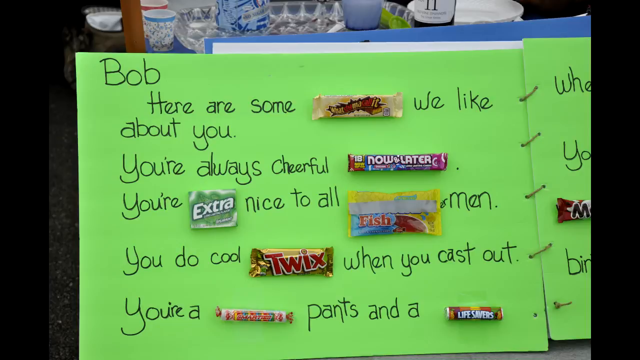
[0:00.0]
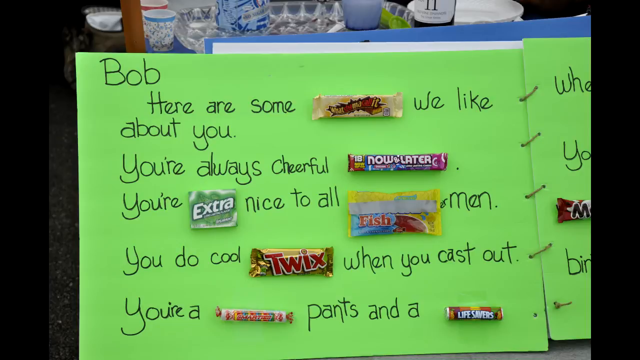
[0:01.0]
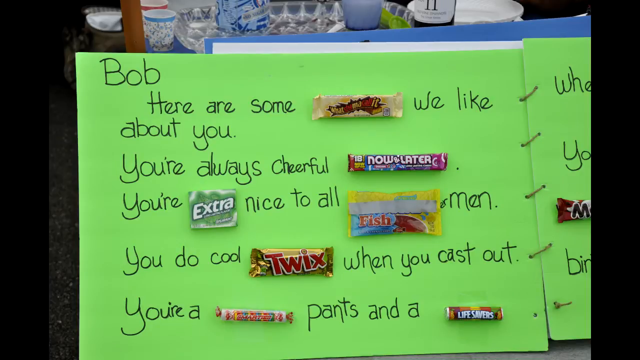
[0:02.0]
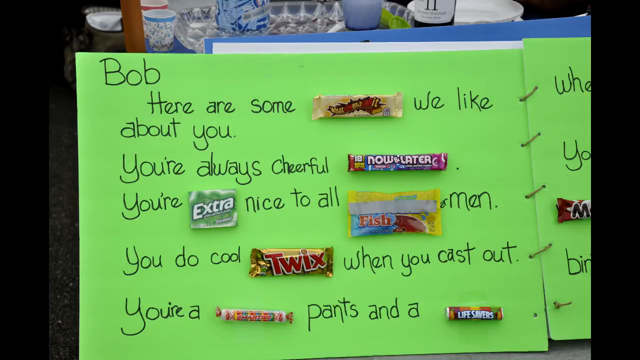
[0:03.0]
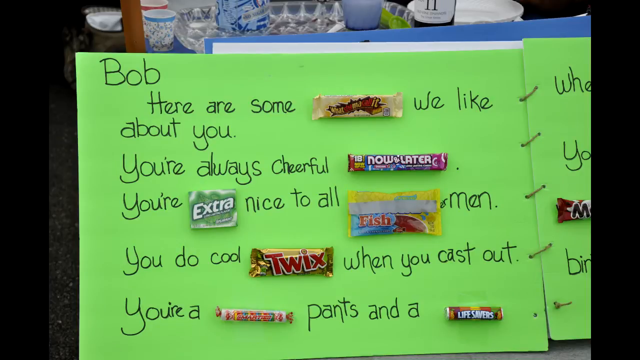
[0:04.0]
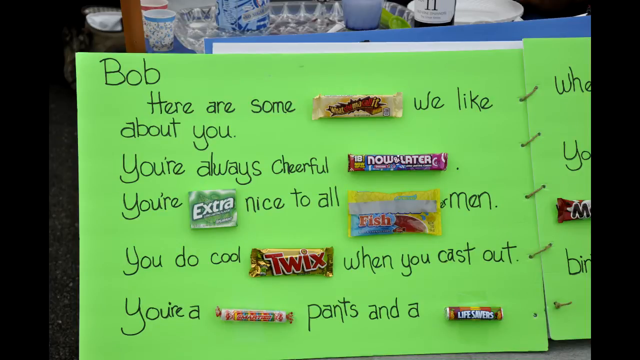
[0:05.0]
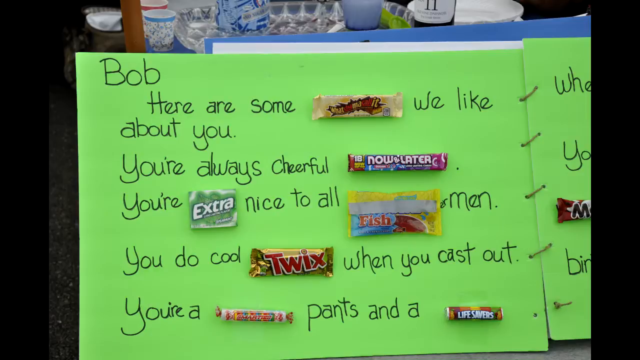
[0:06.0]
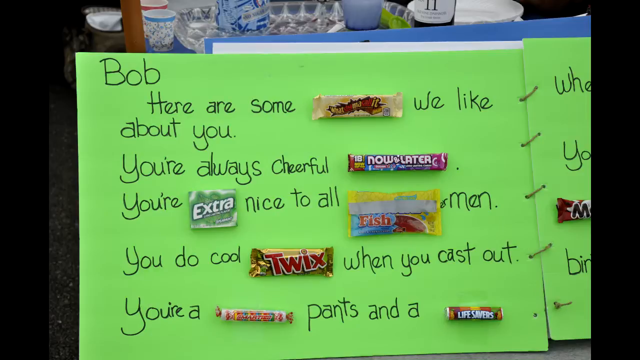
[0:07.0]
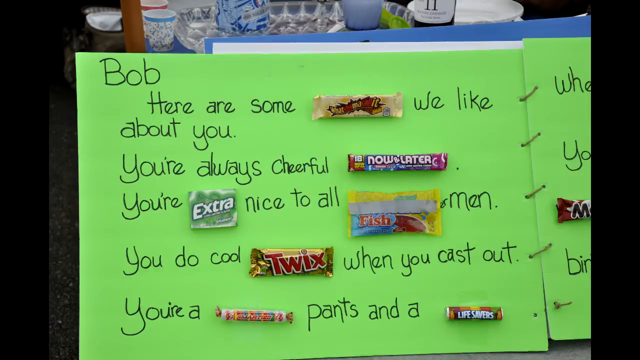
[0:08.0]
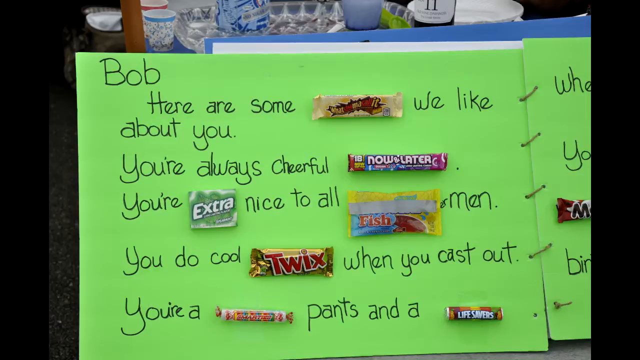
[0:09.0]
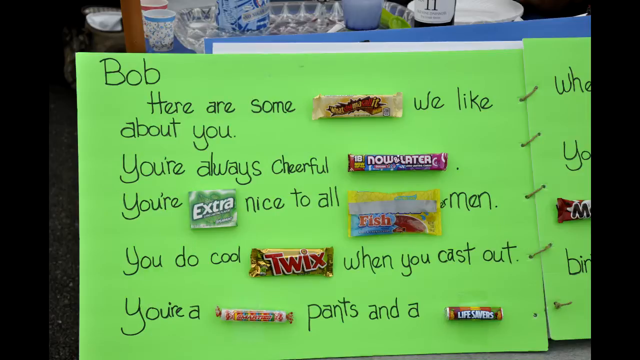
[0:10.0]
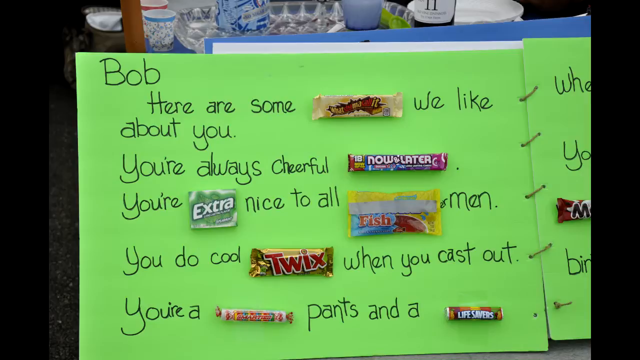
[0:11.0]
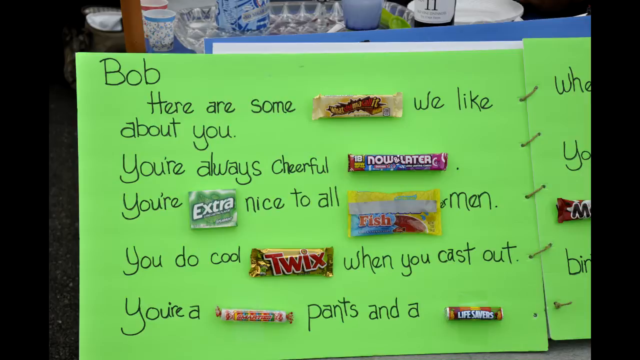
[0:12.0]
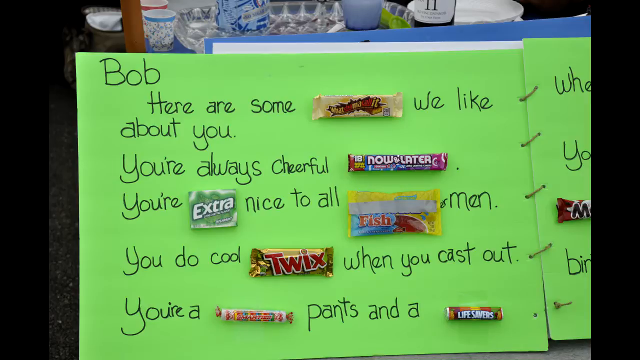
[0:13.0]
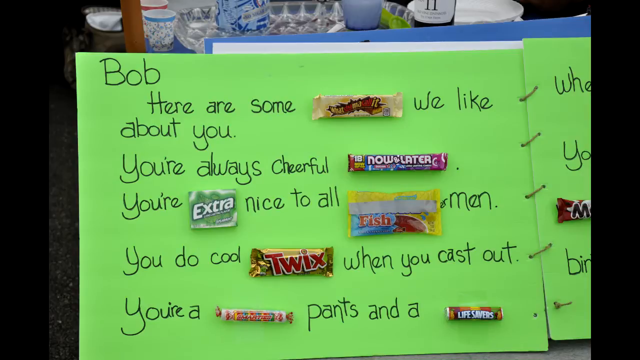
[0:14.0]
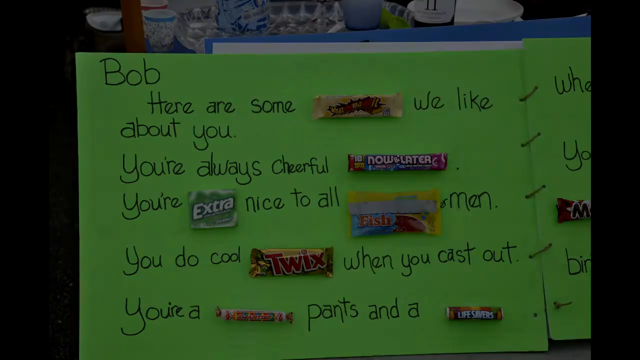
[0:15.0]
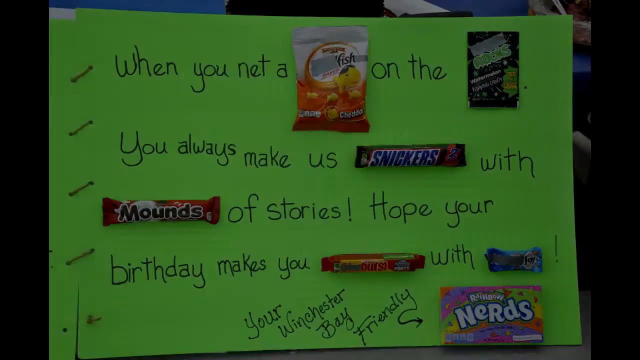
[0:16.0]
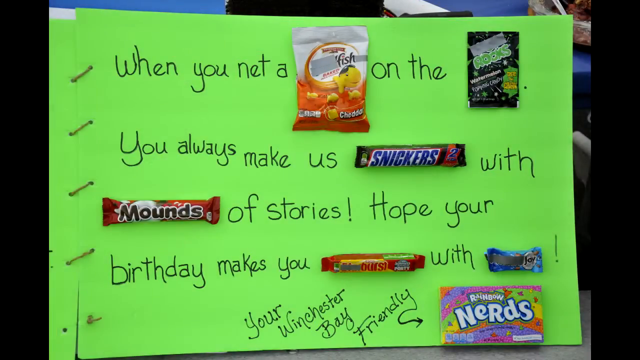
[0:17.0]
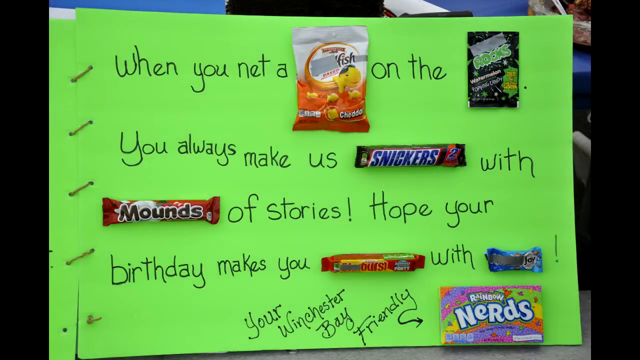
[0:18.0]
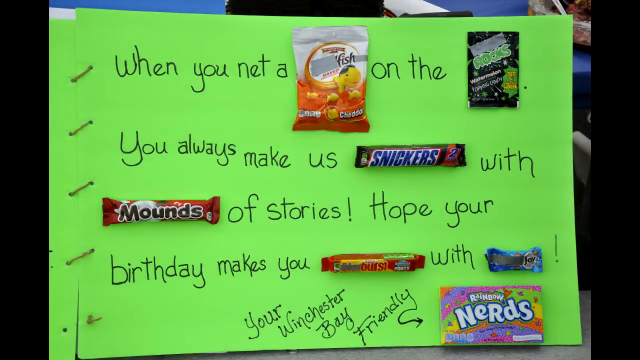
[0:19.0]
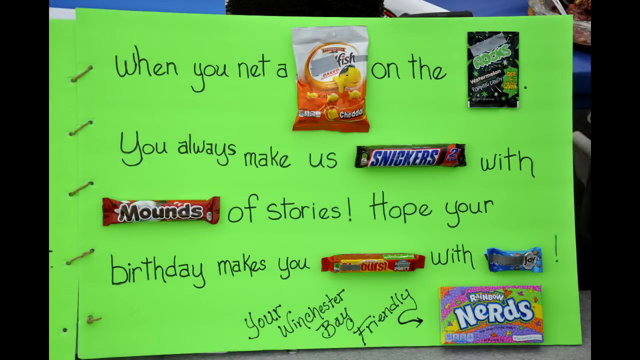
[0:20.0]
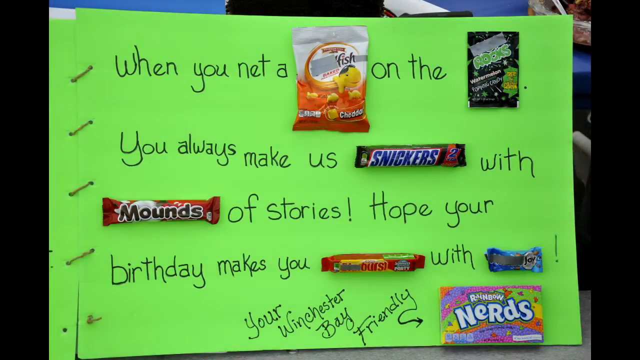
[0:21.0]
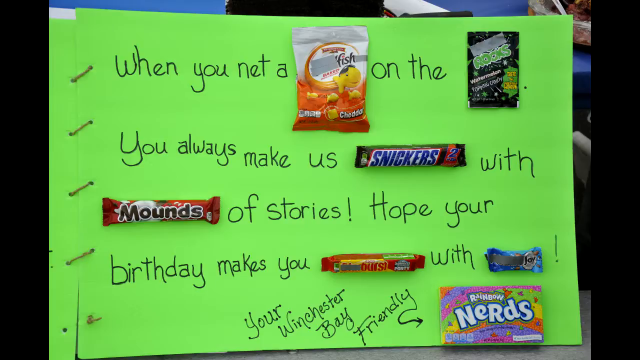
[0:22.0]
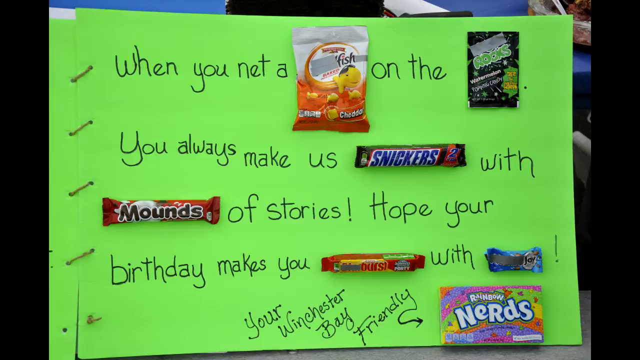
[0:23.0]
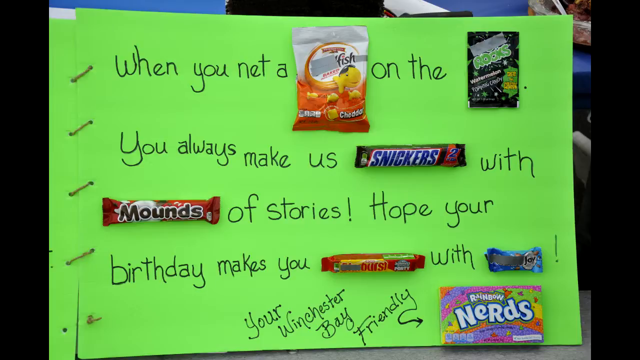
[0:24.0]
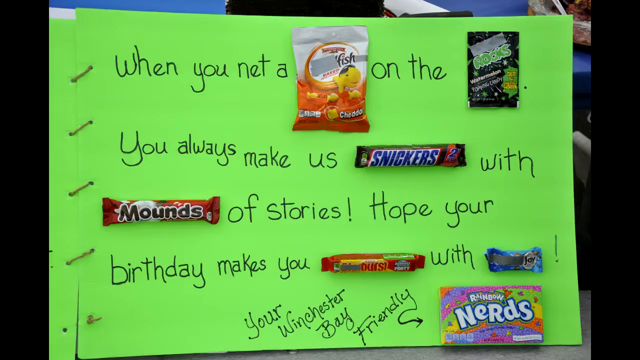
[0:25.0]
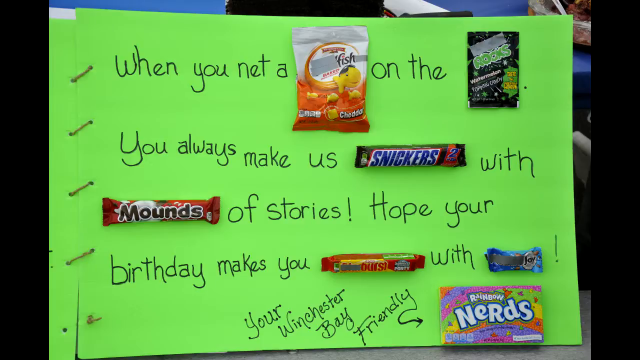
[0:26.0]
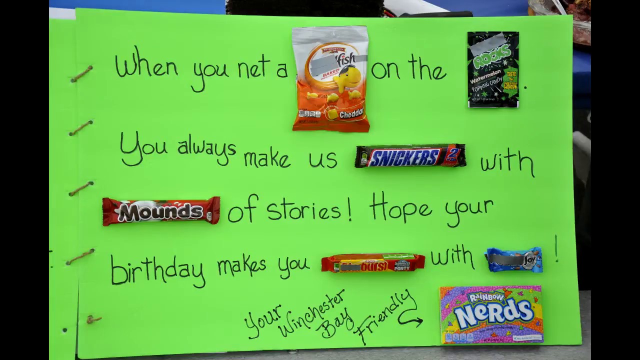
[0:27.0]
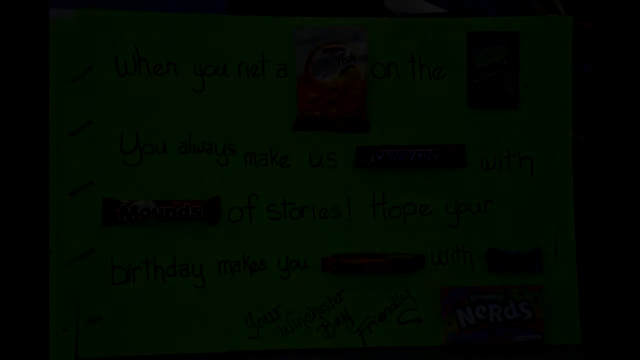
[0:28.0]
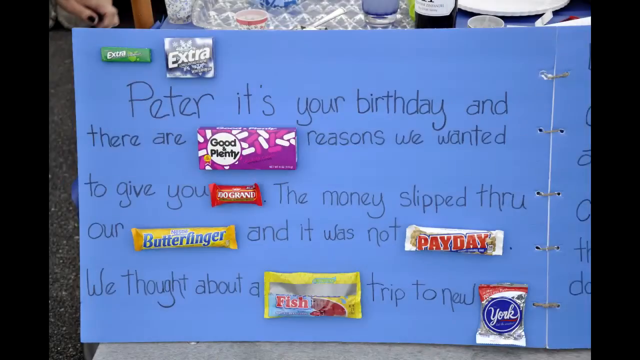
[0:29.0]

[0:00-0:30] A book resembling a lime-colored diary is shown, with words written in black ink at a medium, readable size. Sentences in it have missing words, and candies whose wrappers carry words are placed in the gaps so that the word on each candy completes the sentence. Names such as "Bob" and "Sam" appear, and one name on a candy wrapper cannot be made out. Another sentence reads "you are always cheerful" followed by a candy wrapper reading "now and later", and another uses a sweet wrapper reading "extra".